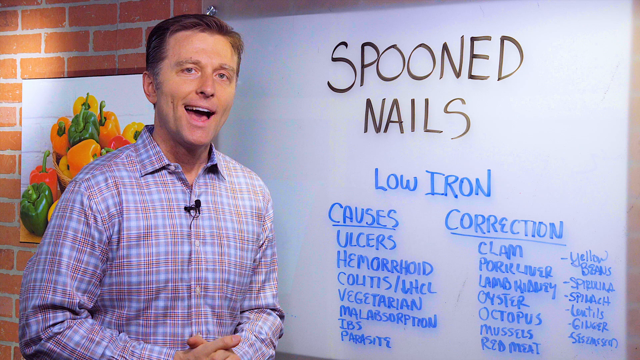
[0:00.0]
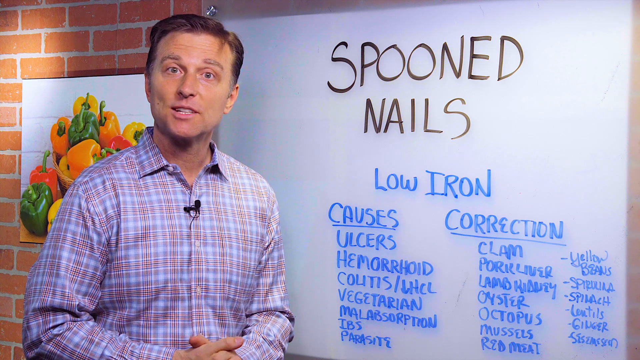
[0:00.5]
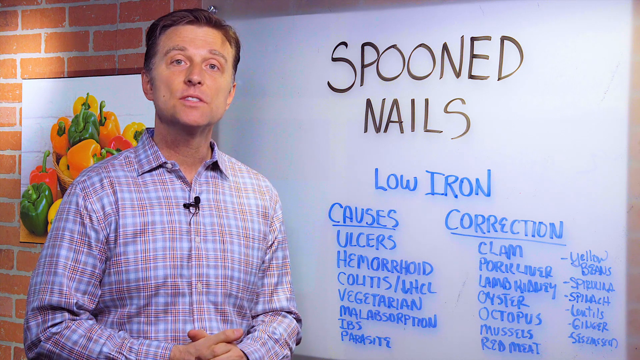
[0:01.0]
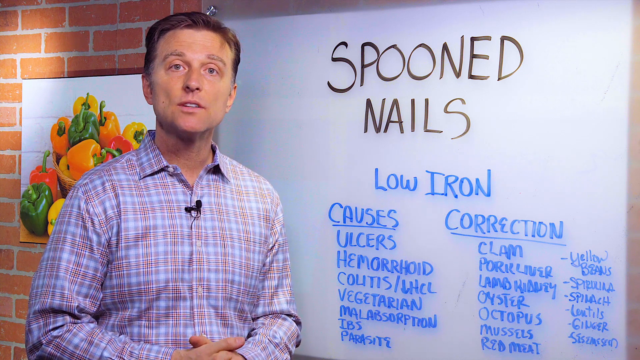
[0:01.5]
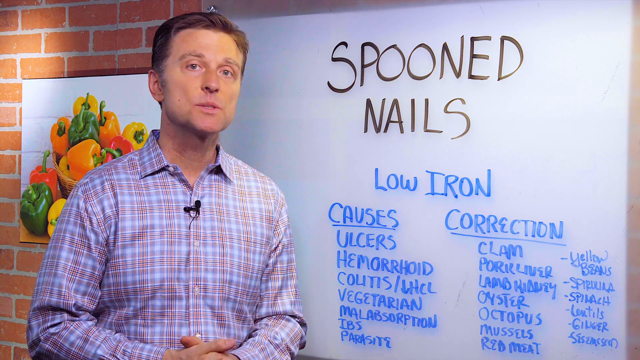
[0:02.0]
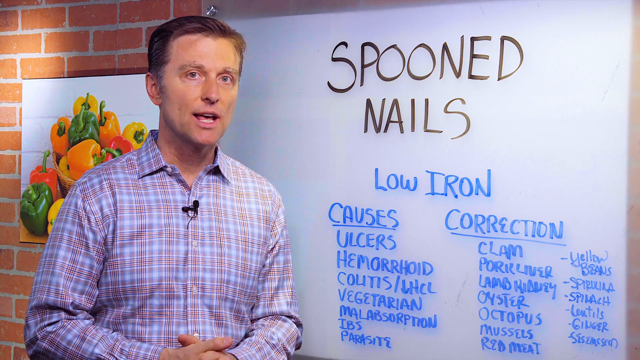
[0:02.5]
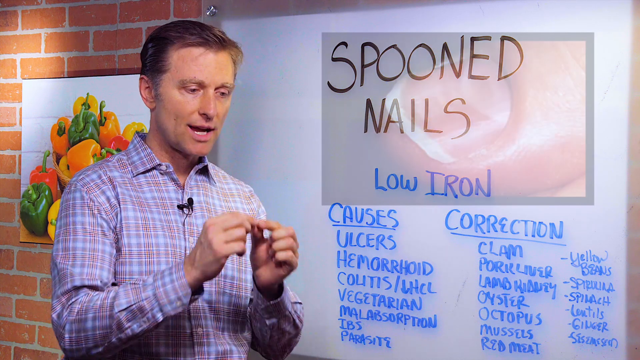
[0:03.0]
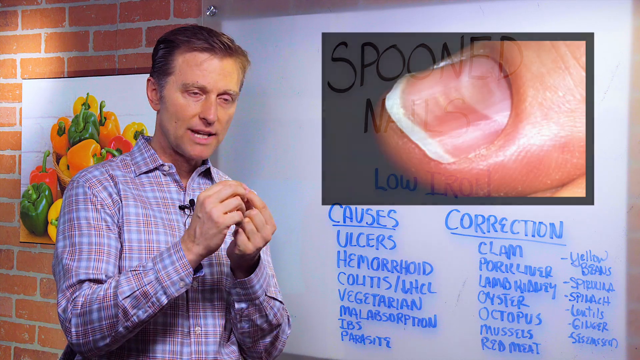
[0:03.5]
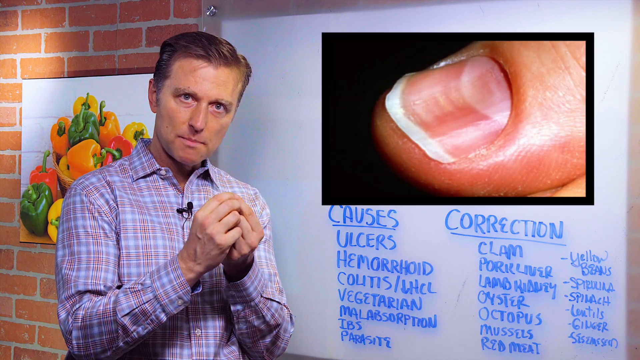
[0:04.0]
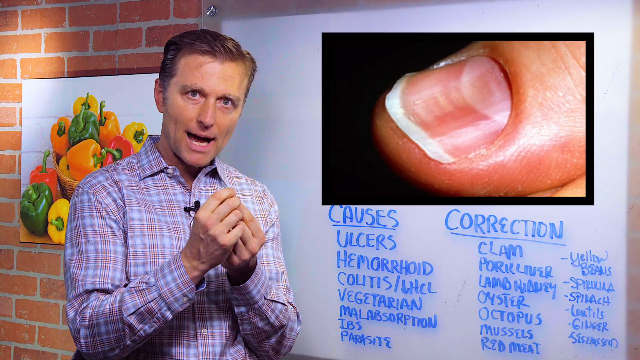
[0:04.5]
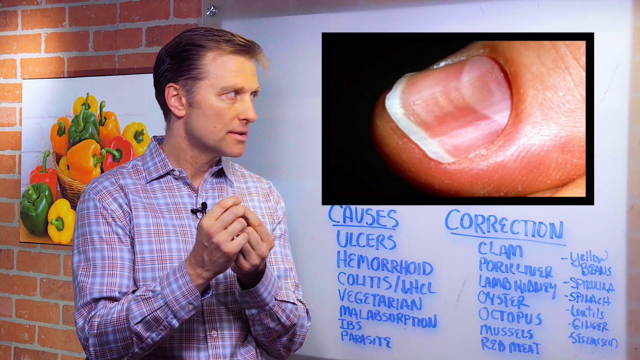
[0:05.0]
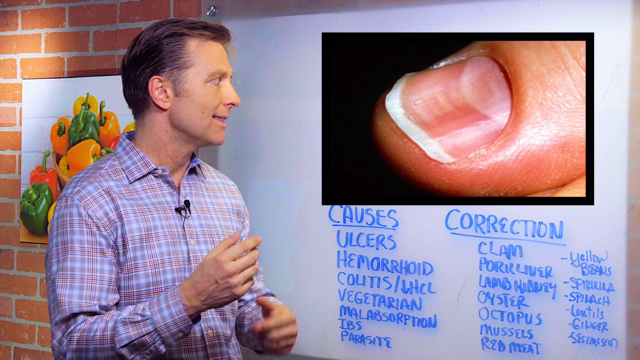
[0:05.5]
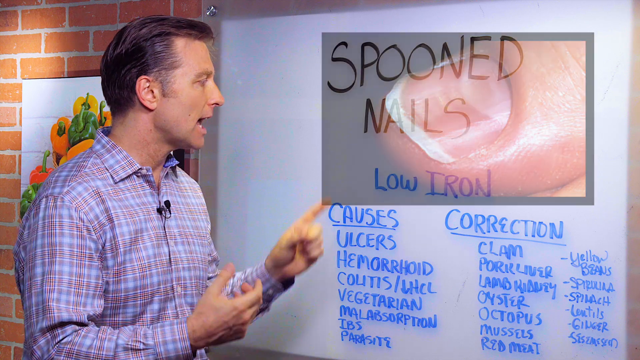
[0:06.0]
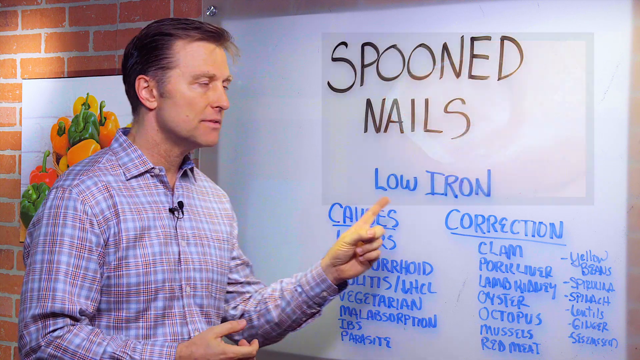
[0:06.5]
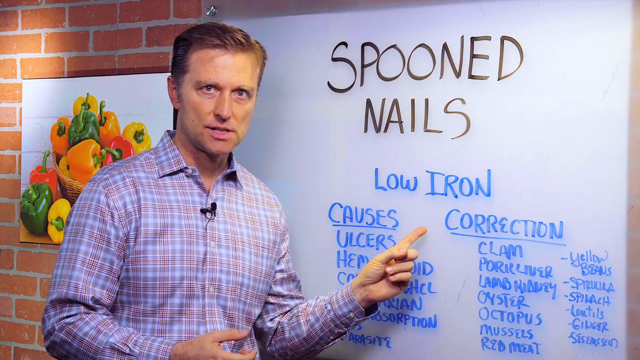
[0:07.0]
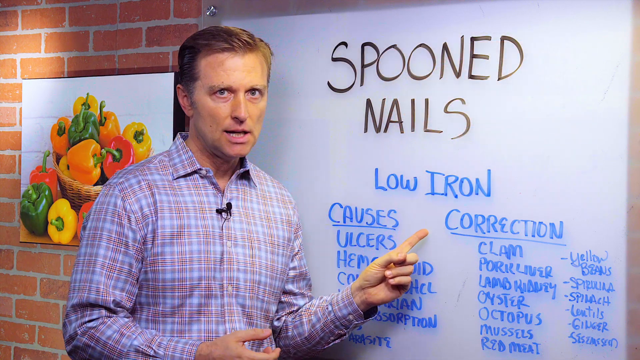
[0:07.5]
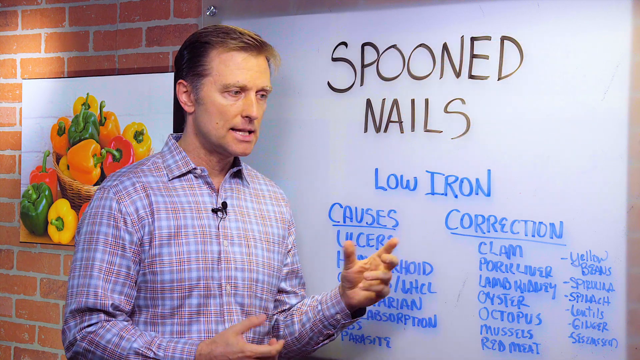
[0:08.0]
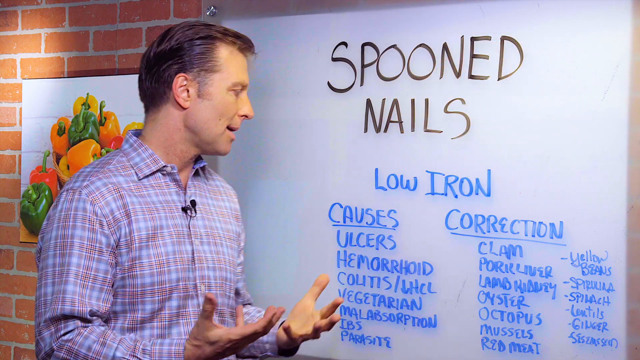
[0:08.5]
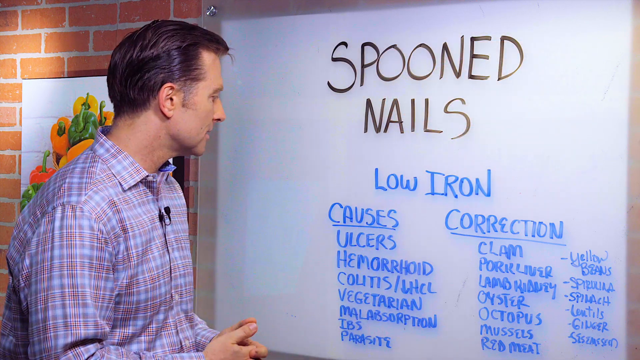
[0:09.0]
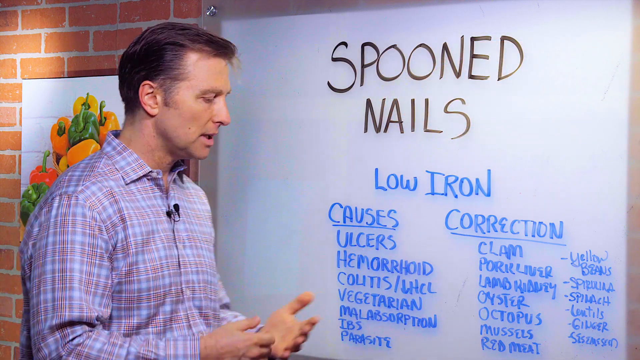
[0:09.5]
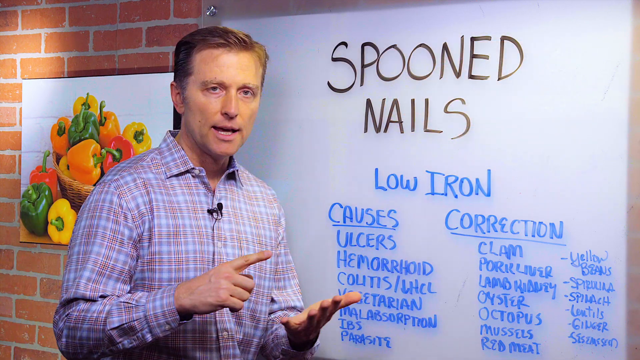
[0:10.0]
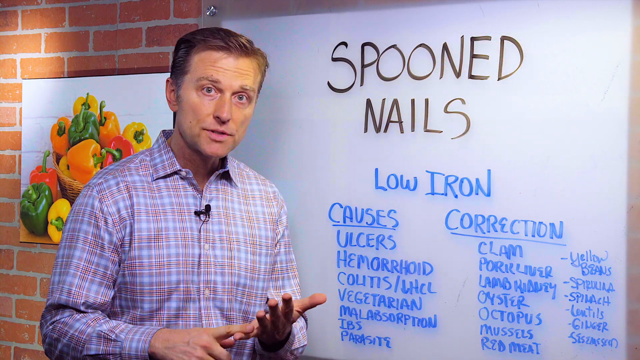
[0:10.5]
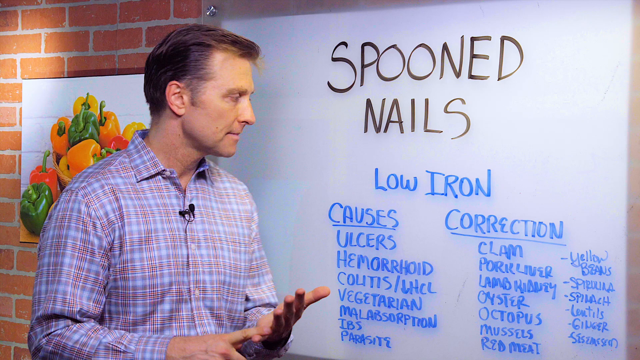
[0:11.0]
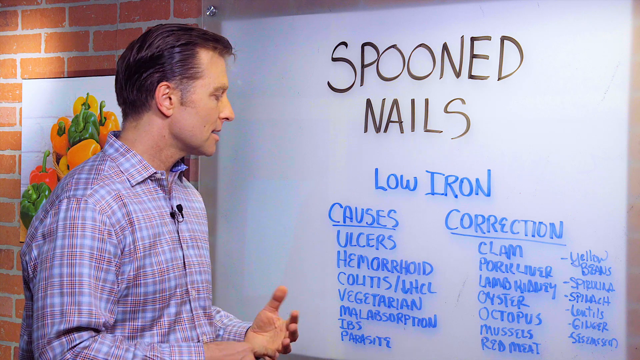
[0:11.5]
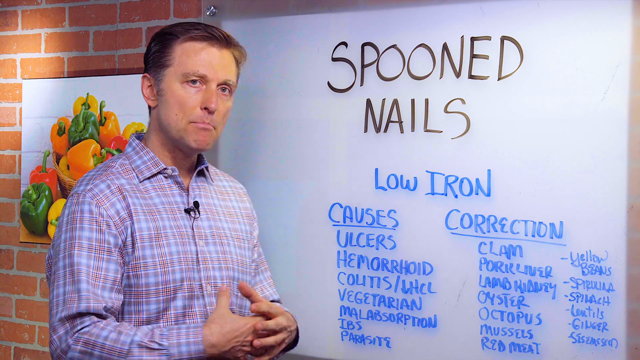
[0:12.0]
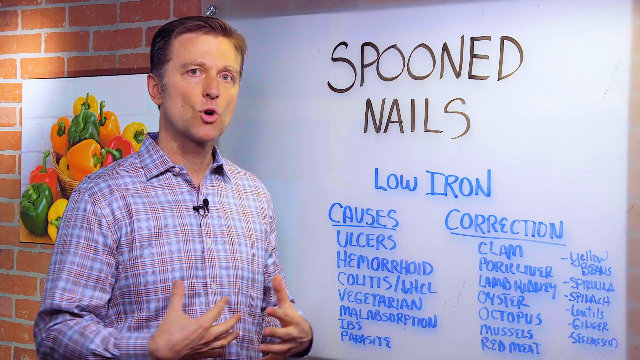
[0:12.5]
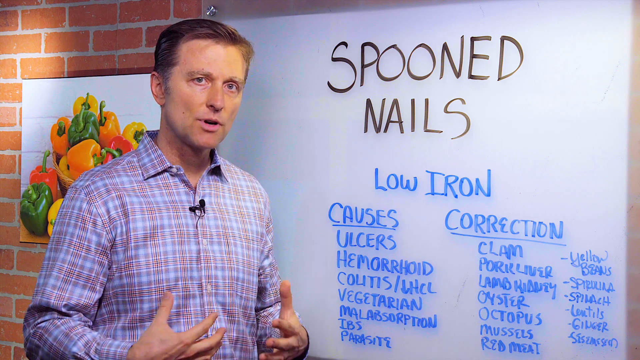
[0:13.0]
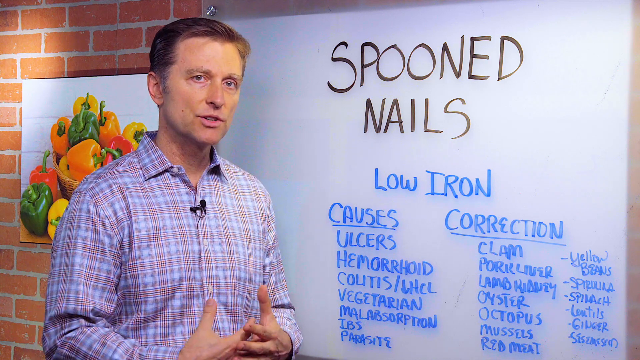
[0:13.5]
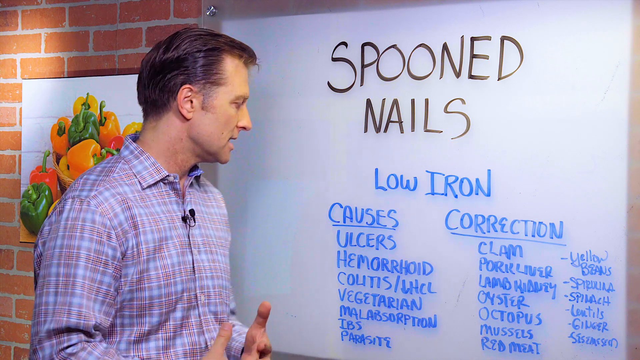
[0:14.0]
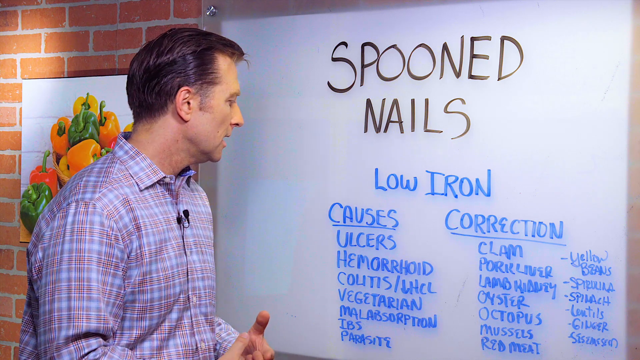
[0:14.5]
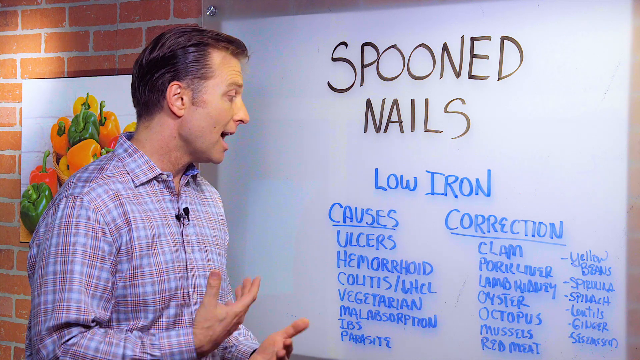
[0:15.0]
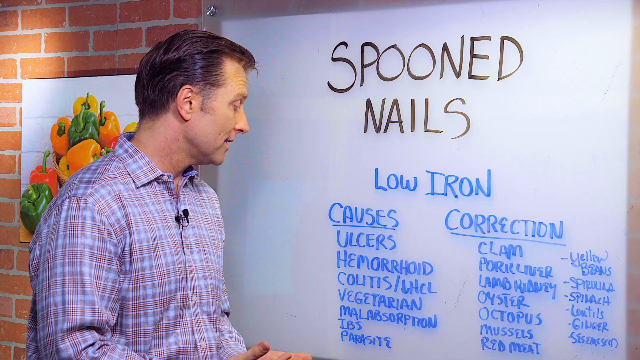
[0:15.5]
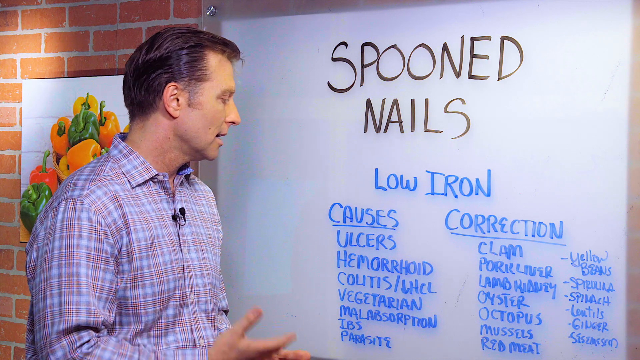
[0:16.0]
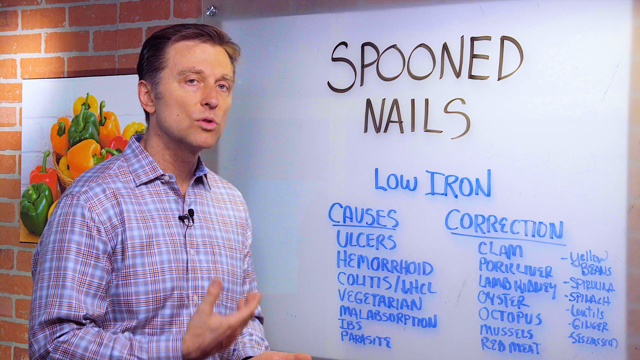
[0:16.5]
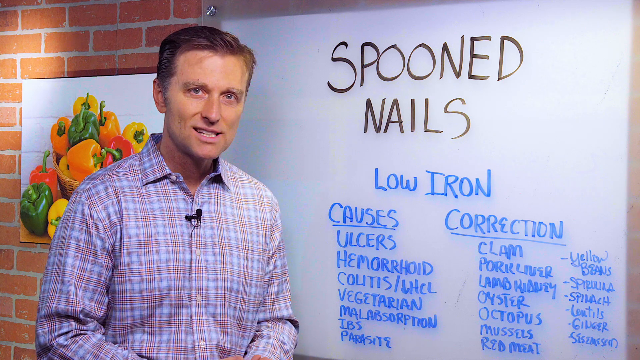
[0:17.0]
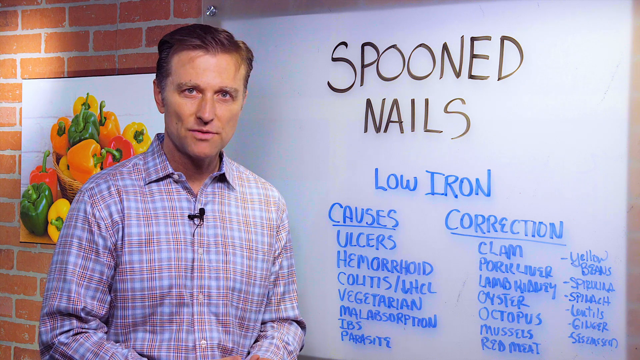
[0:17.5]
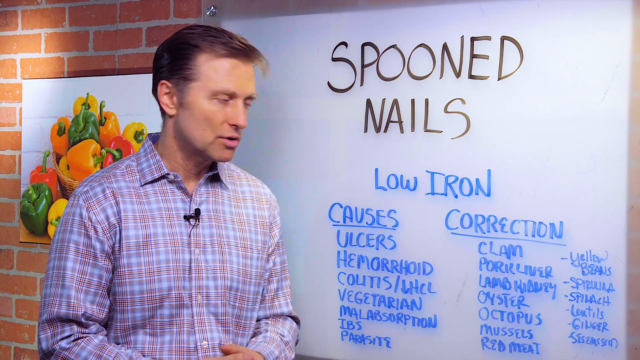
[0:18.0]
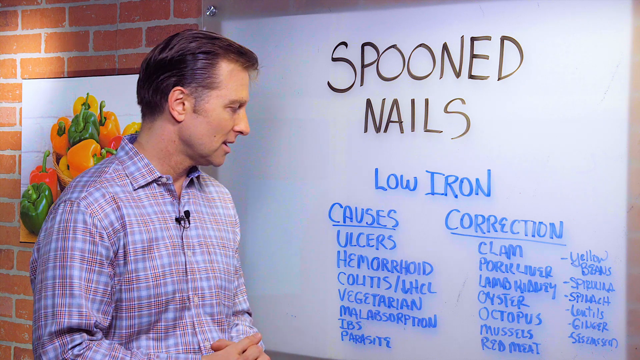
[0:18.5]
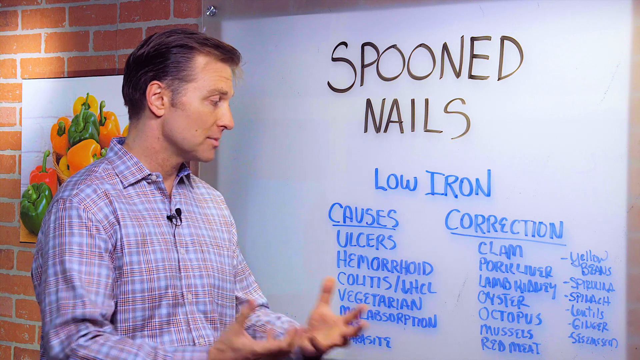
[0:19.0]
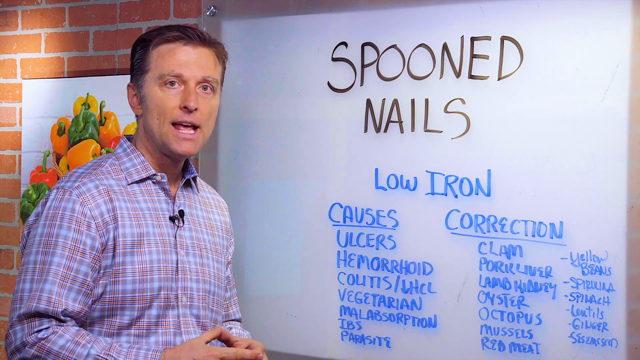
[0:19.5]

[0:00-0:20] The video takes place indoors, in a room with a white dry erase board and a brick backdrop. A Caucasian man with blonde-brown hair and light eyes speaks; he wears a button-up shirt with a microphone attached to it. He speaks as though explaining something. At first he doesn't really move his arms and just talks. Then he lifts his arms in the air and puts his hands together as he describes something, kind of squinching his fingers together so they touch. He turns to profile, looks at the dry erase board, and points at it with his left hand and left pointer finger. He turns back, kind of puts both hands up, and swivels a couple of times. He starts counting, splaying his left hand outward and counting on the fingers of his right hand. He then moves his hands back and forth and kind of pivots his body toward the board.